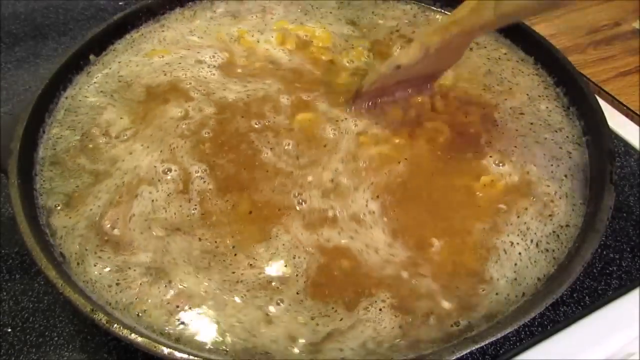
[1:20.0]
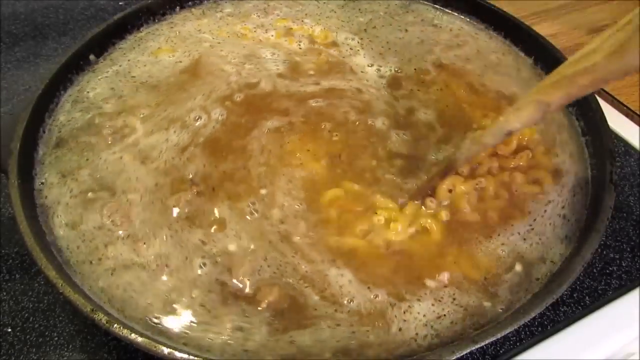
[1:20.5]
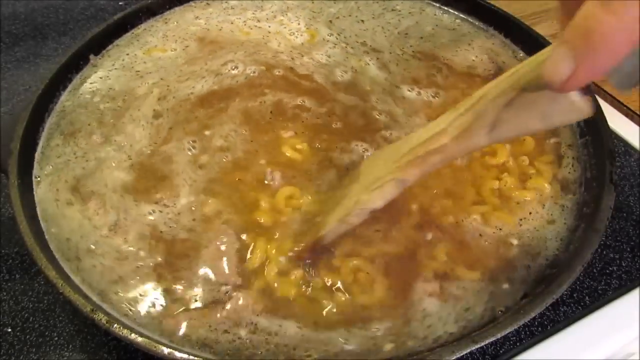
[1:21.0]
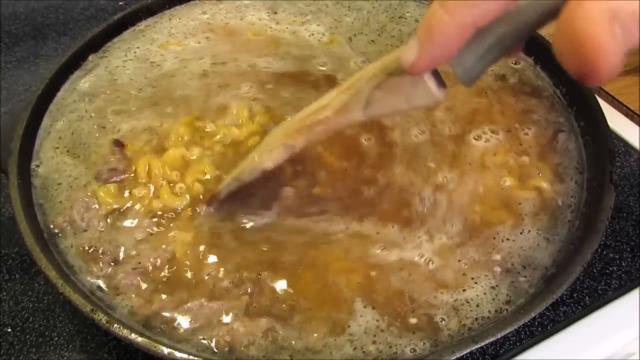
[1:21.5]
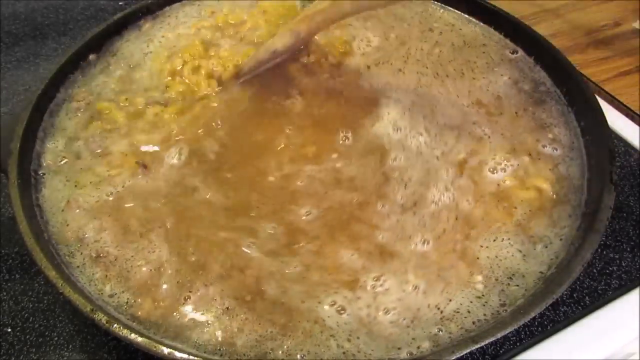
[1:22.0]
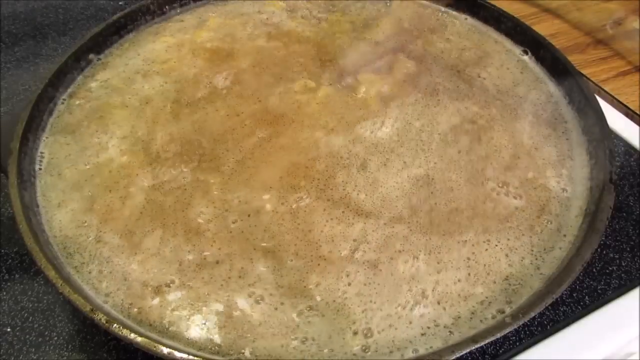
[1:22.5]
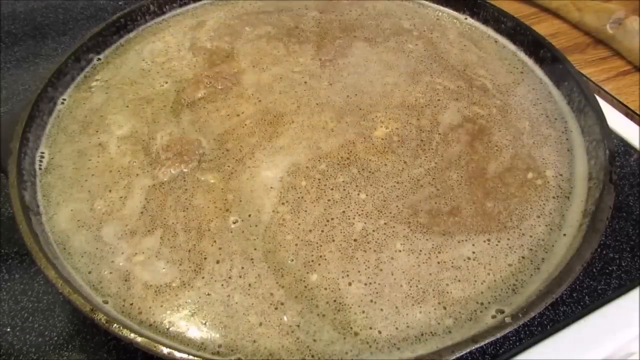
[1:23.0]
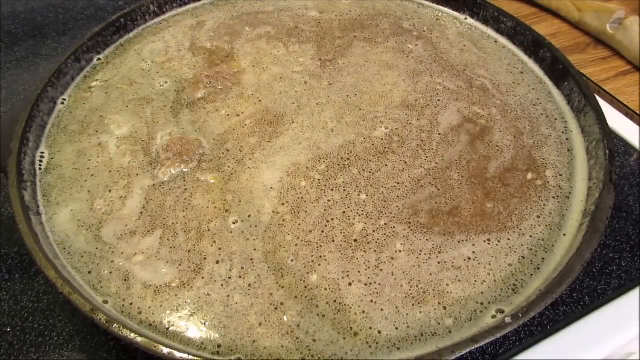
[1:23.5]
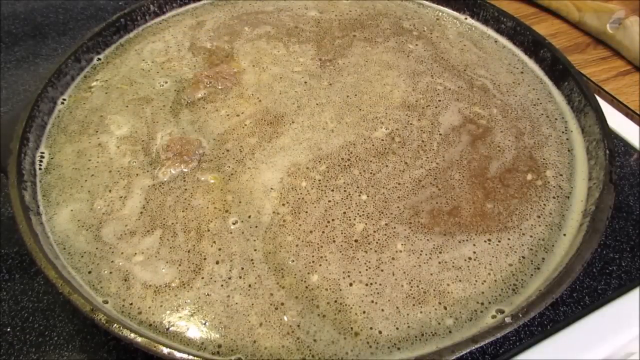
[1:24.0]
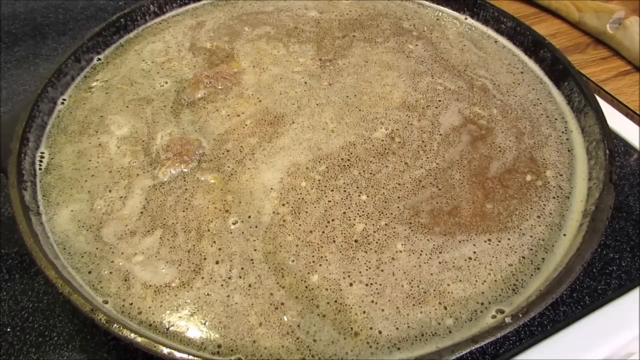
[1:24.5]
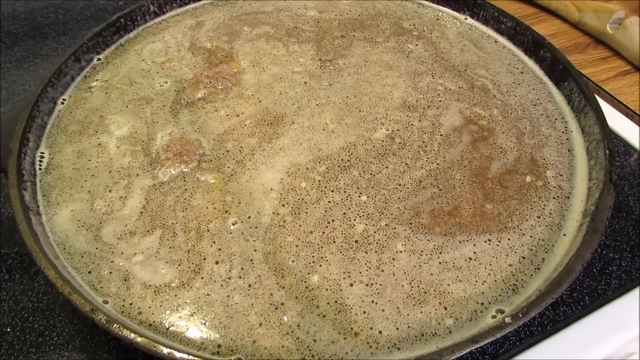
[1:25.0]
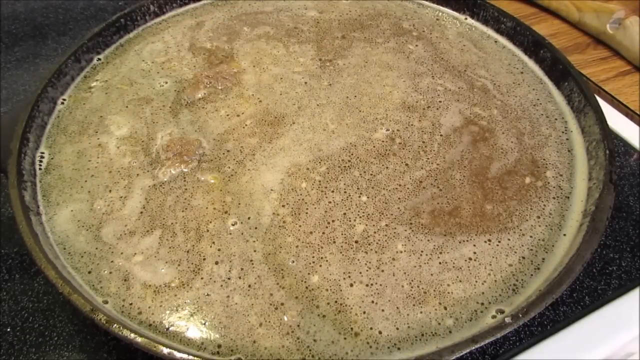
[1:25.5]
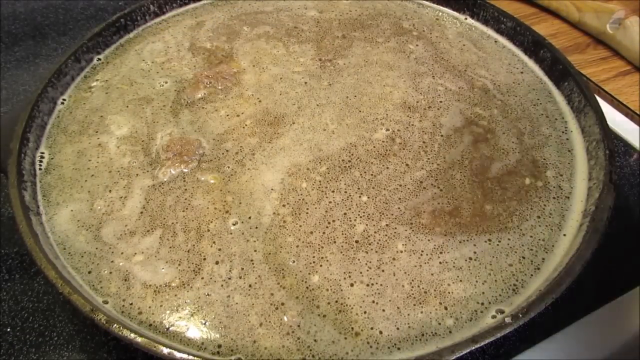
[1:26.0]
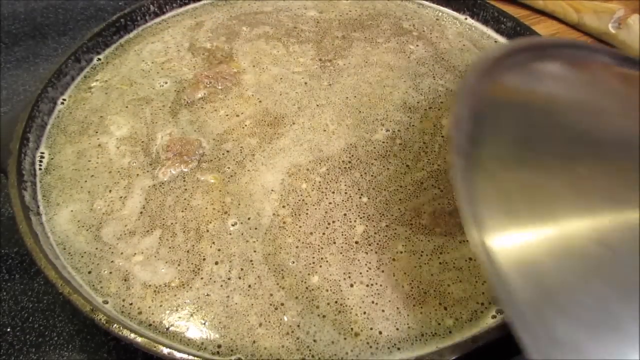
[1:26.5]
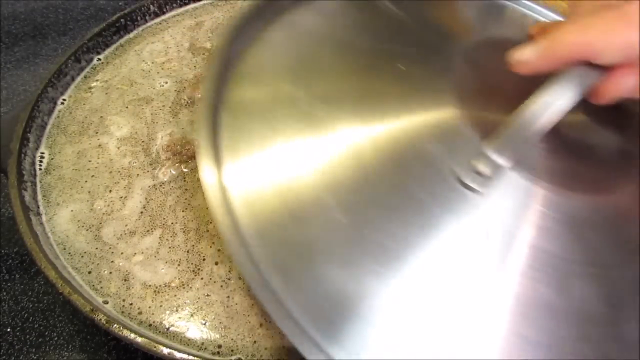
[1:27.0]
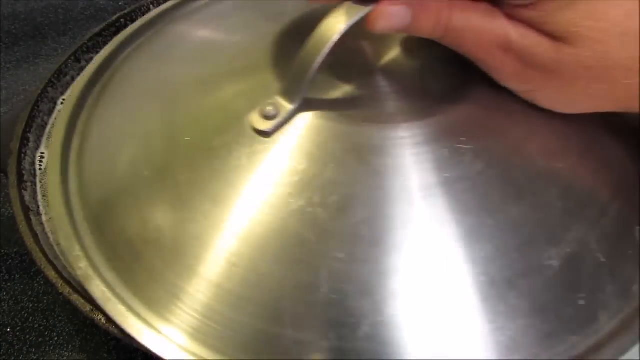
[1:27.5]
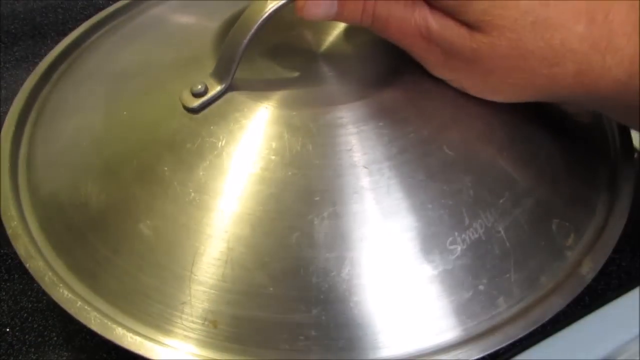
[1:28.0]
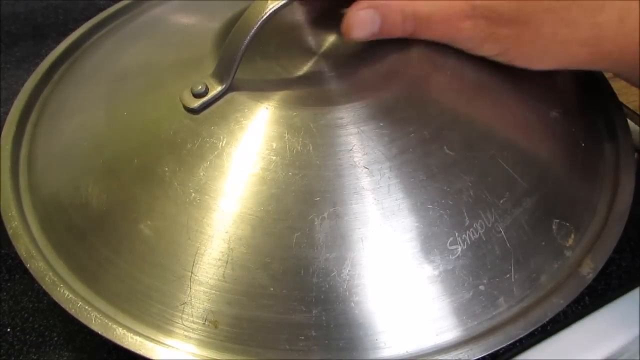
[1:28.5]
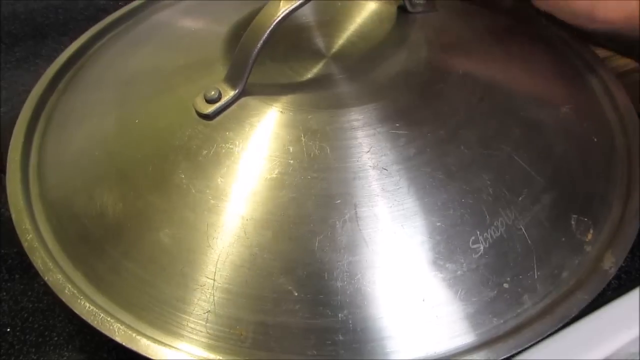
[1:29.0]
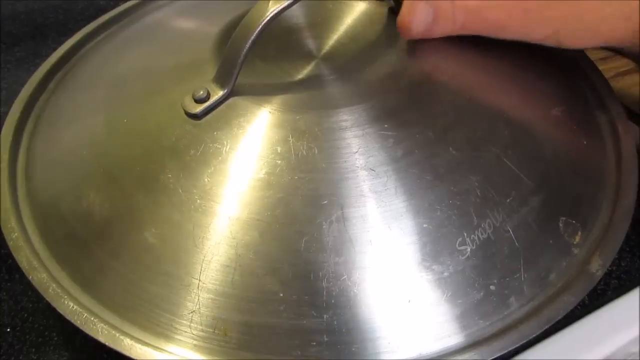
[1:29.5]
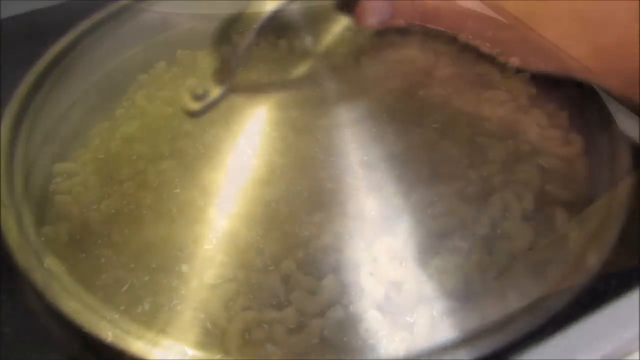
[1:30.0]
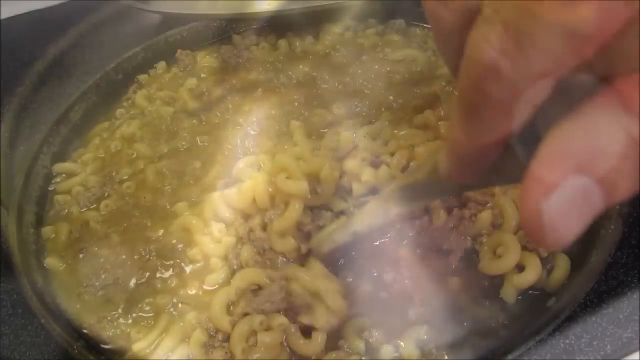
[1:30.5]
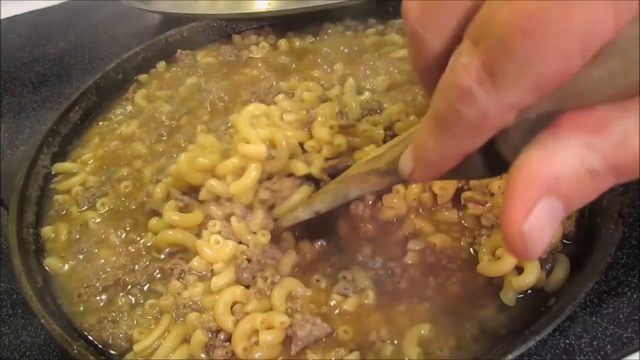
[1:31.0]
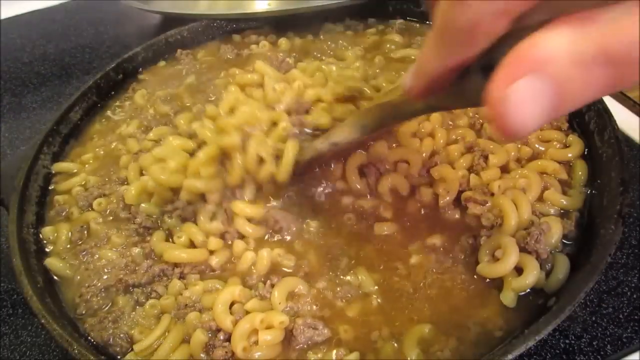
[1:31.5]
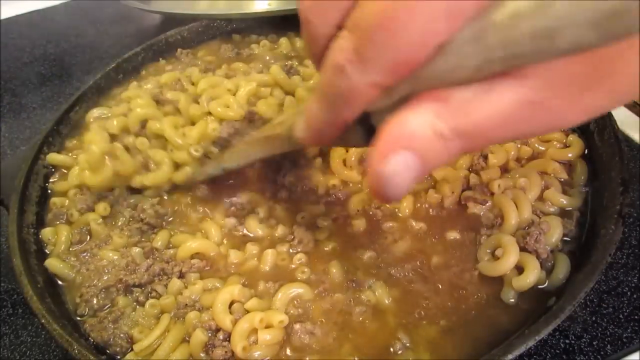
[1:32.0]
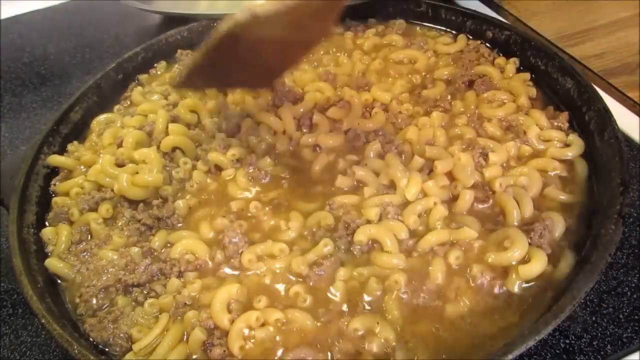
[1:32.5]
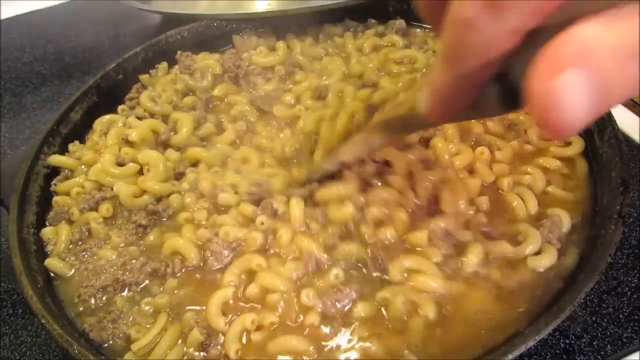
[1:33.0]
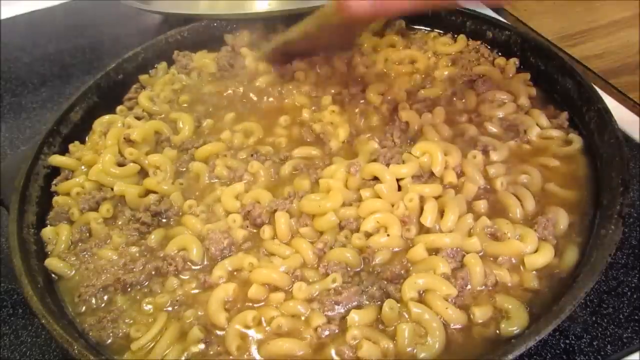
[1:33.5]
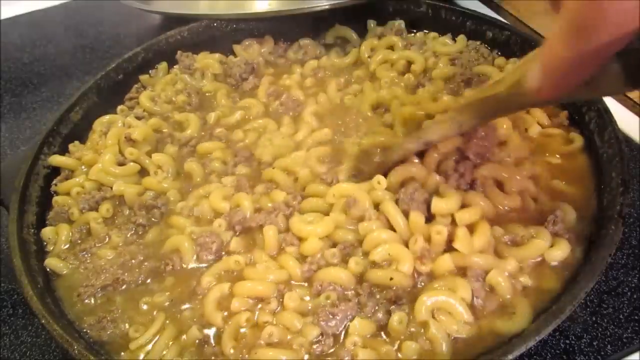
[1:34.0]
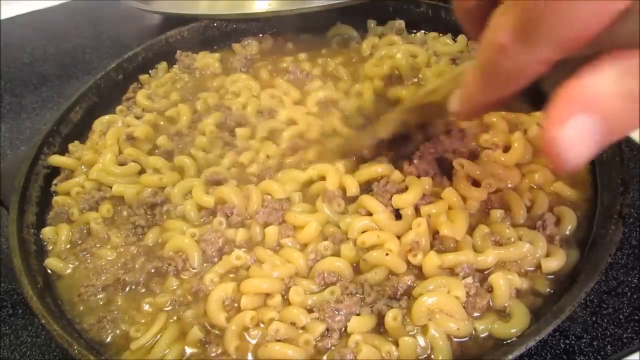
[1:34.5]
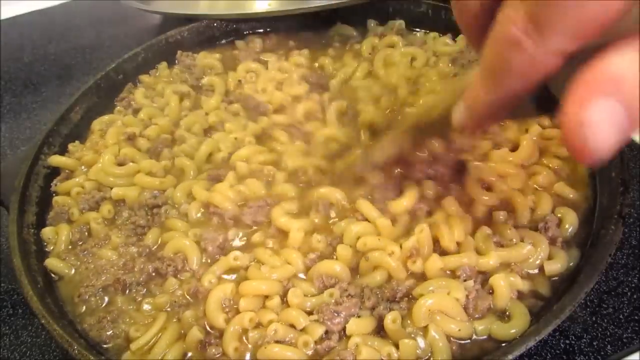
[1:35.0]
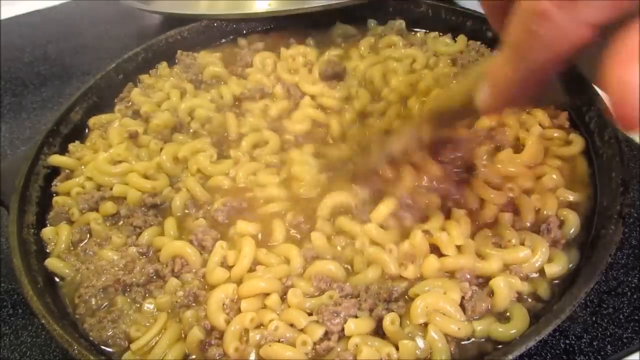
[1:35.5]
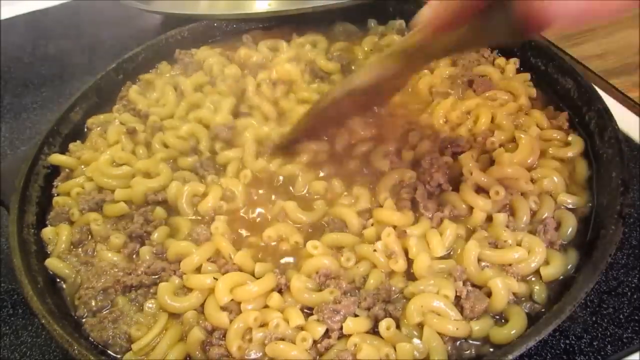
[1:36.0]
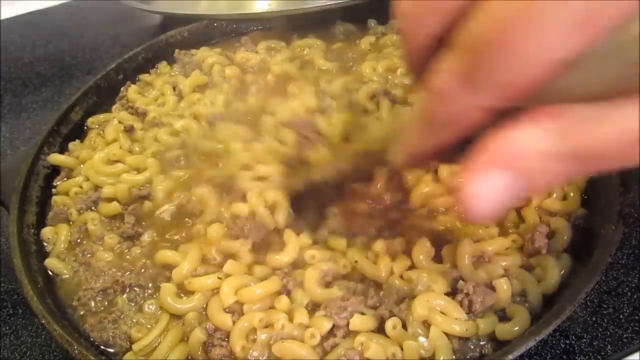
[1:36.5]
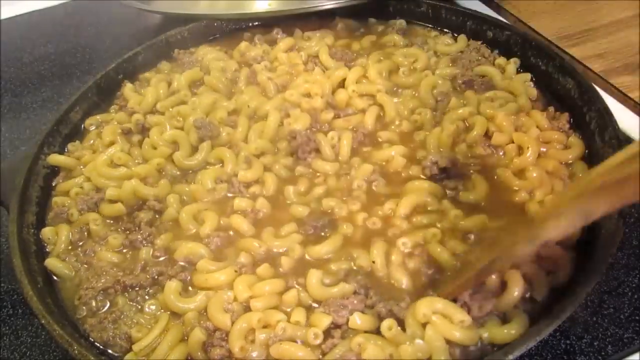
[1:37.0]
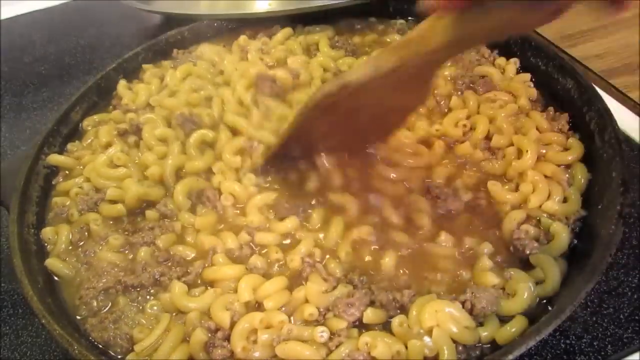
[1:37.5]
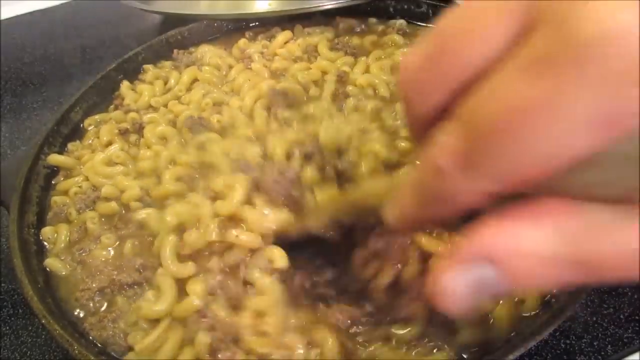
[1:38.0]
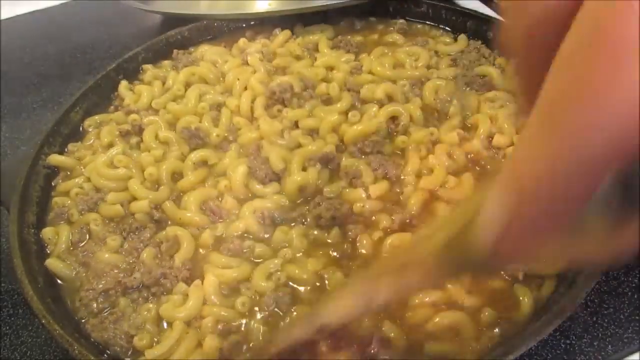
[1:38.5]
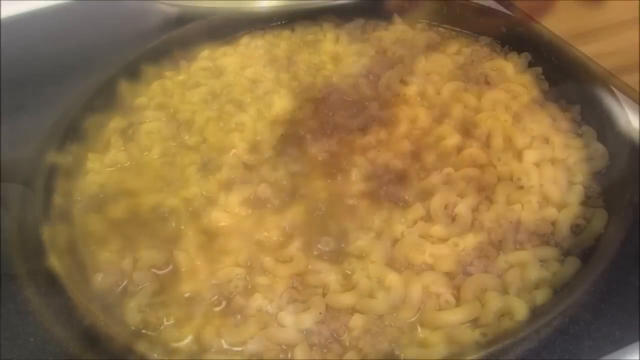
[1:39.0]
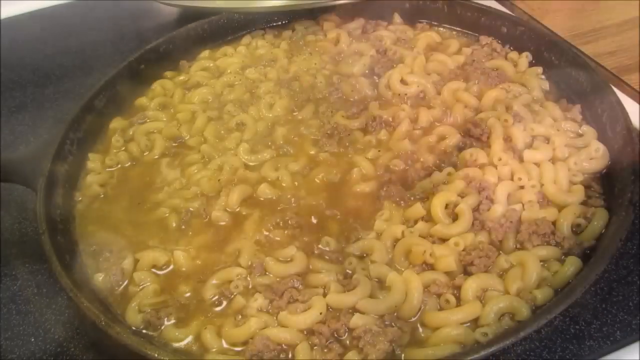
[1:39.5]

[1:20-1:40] She mixes the macaroni and mince in the water again and lets it sit, with whitish and blackish bits on top of the water and the mince and macaroni right below in the pot. She takes a silver lid in her hands and closes the pot to let it cook and simmer. The video then cuts to her opening it: the water is almost halfway down, and the mince looks cooked and well mixed. She mixes again, maybe checking the consistency, then closes the pot again to let it simmer and continue cooking. The food is cooked and the sauce is a little thicker, with the spices mixed in. The mixing is done with a wooden spatula in the same black pan.